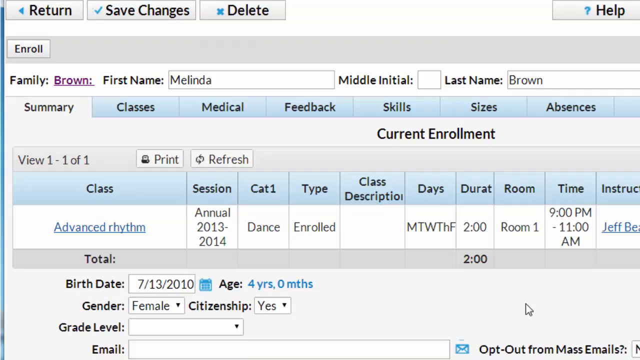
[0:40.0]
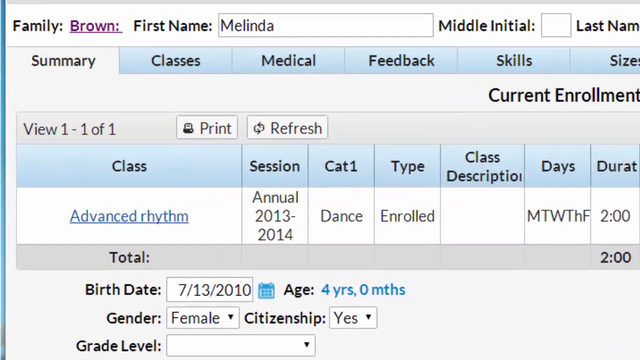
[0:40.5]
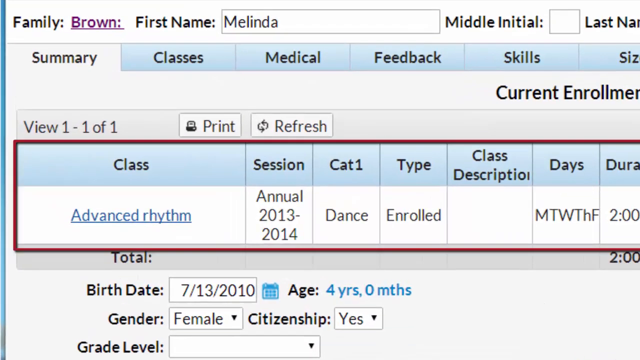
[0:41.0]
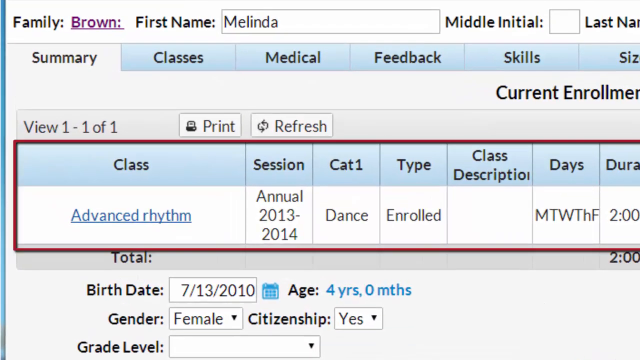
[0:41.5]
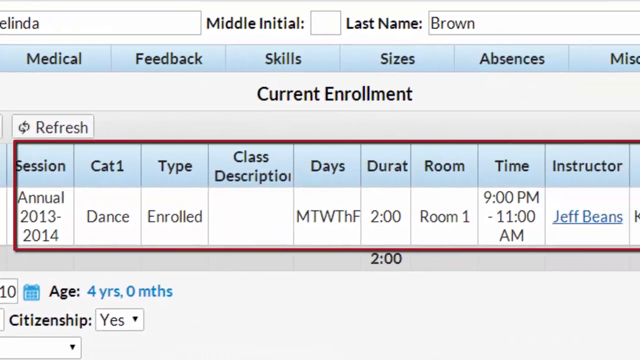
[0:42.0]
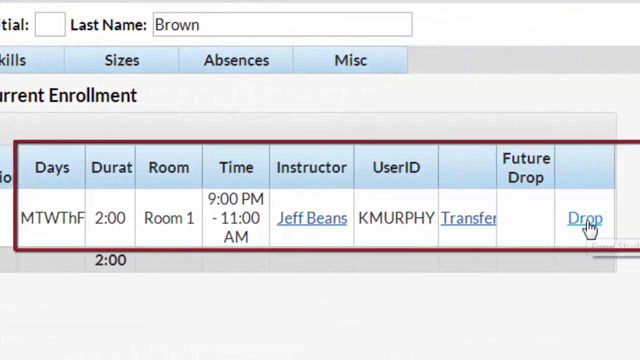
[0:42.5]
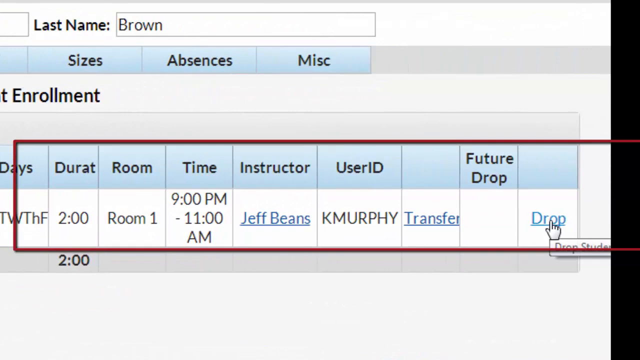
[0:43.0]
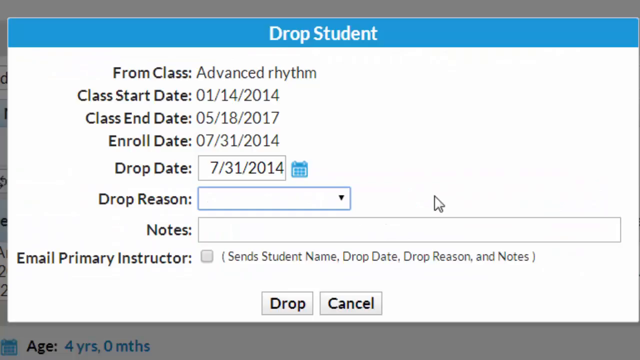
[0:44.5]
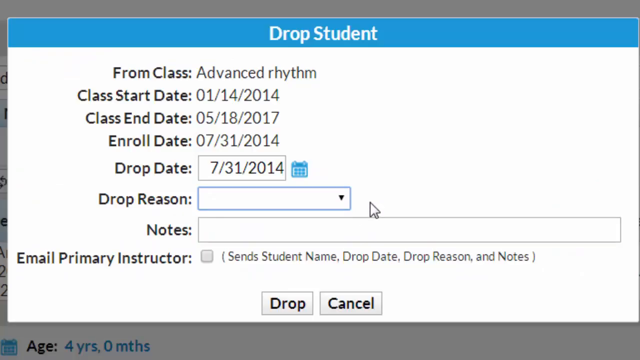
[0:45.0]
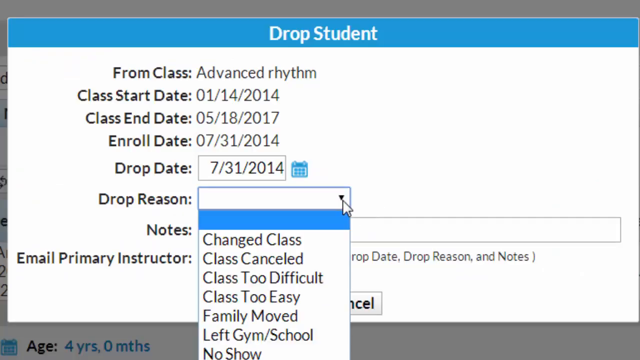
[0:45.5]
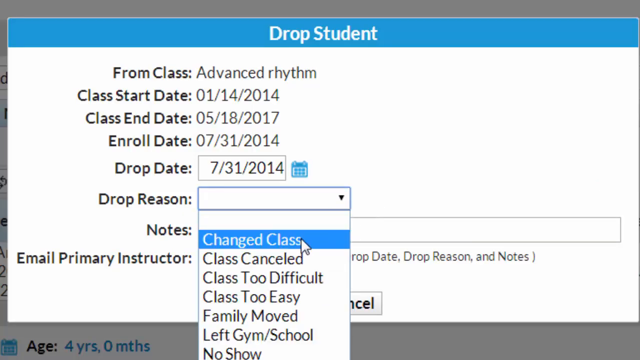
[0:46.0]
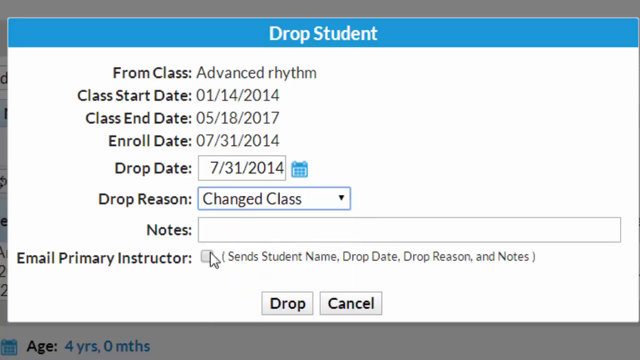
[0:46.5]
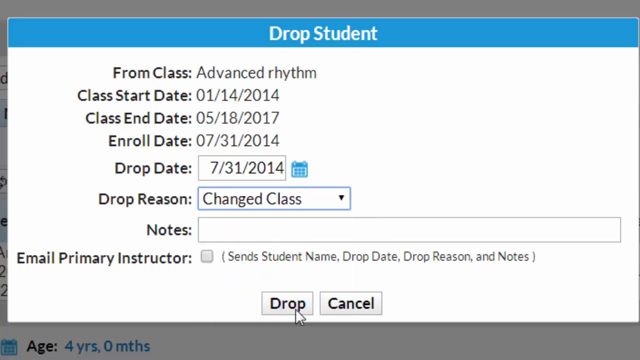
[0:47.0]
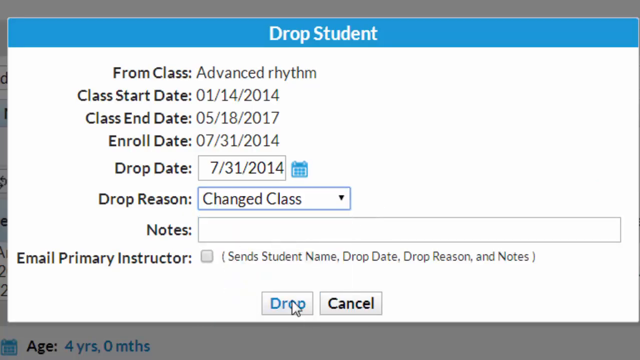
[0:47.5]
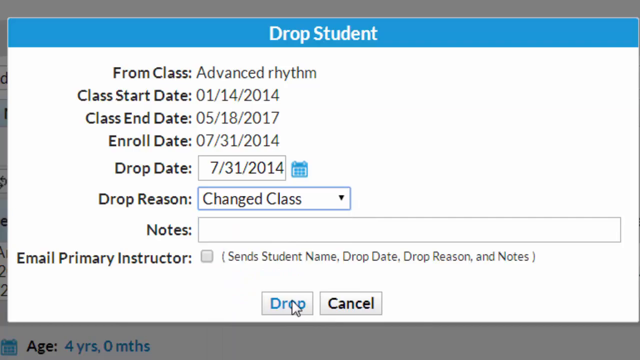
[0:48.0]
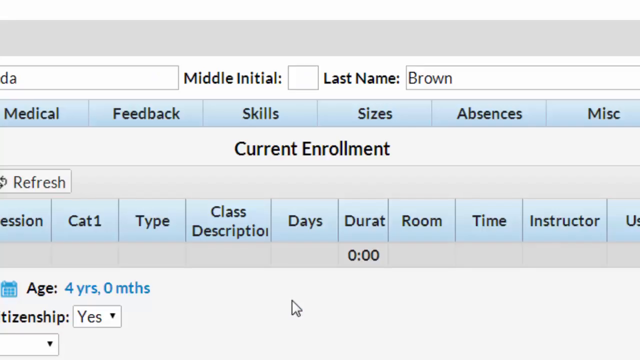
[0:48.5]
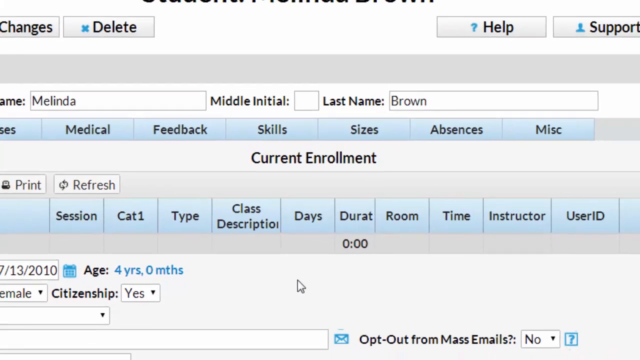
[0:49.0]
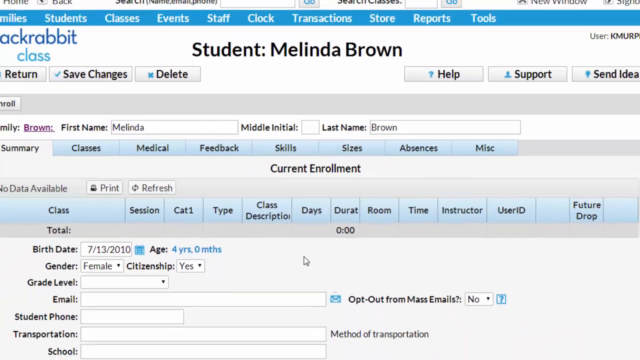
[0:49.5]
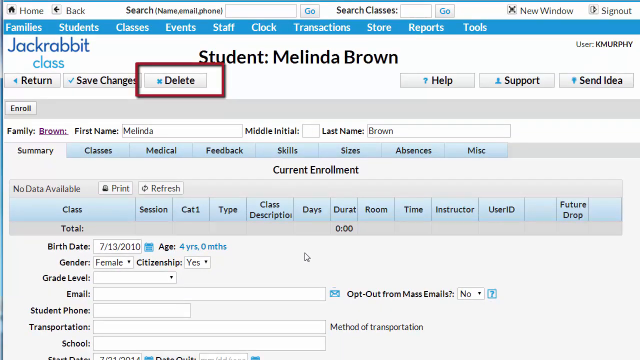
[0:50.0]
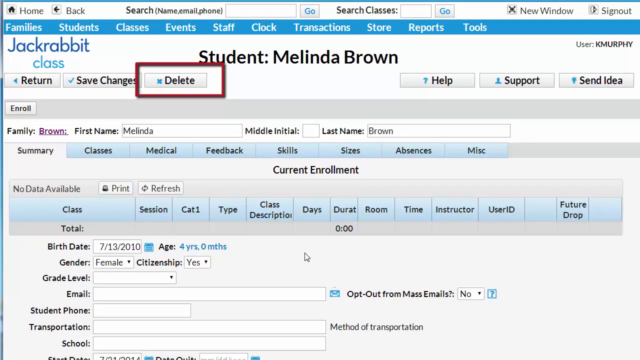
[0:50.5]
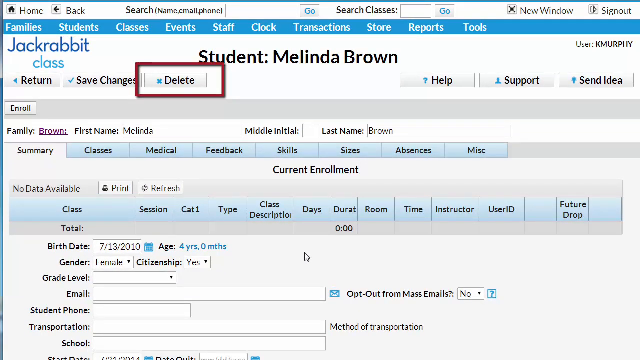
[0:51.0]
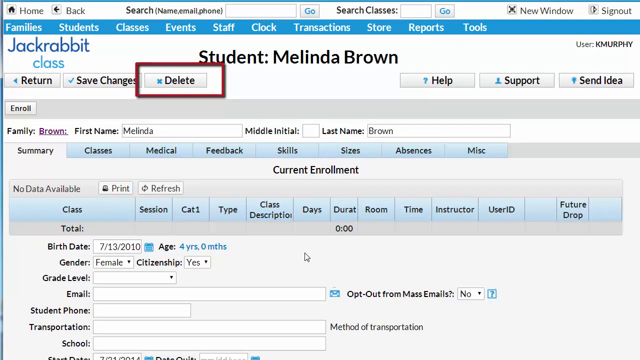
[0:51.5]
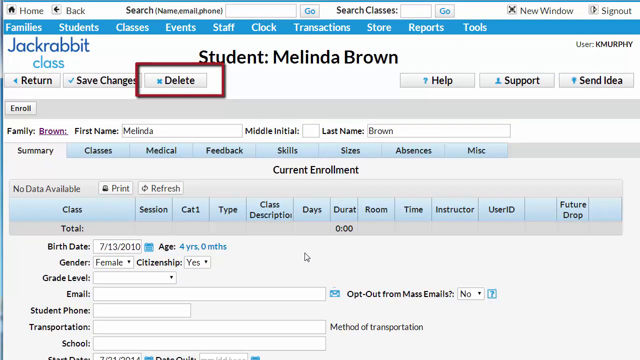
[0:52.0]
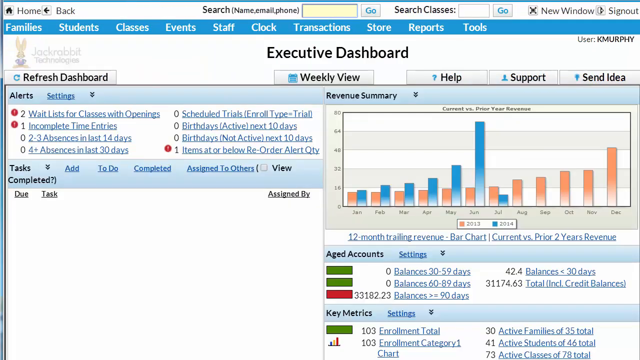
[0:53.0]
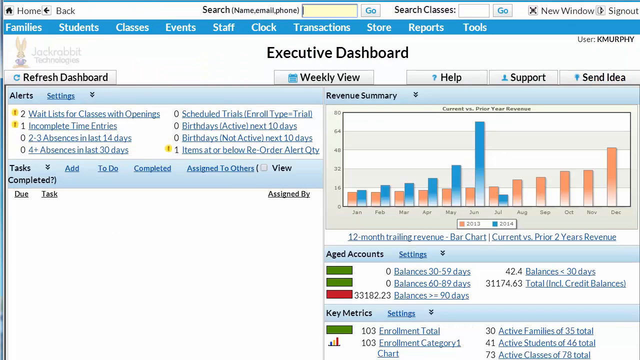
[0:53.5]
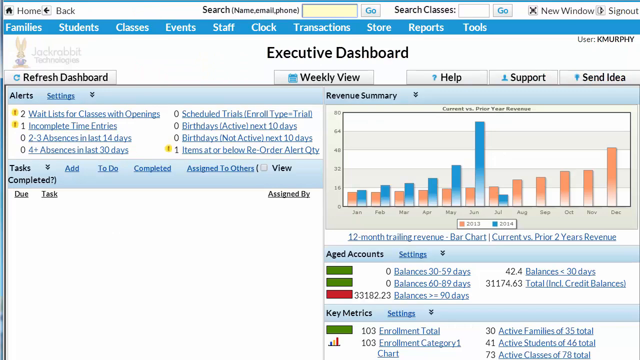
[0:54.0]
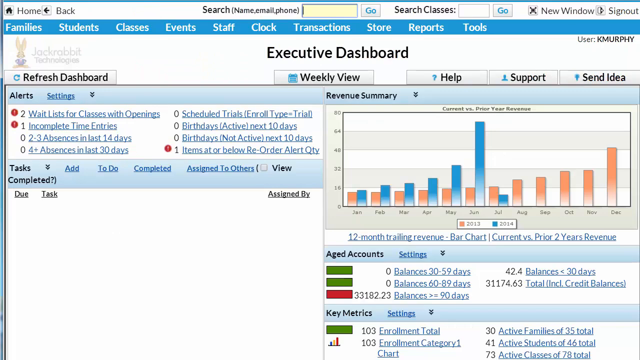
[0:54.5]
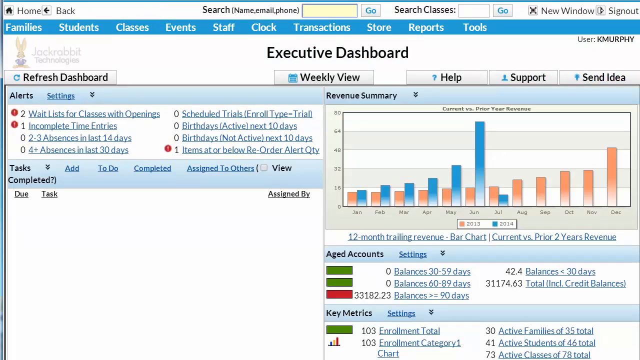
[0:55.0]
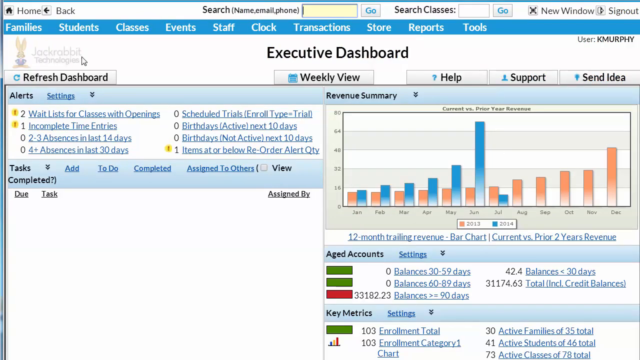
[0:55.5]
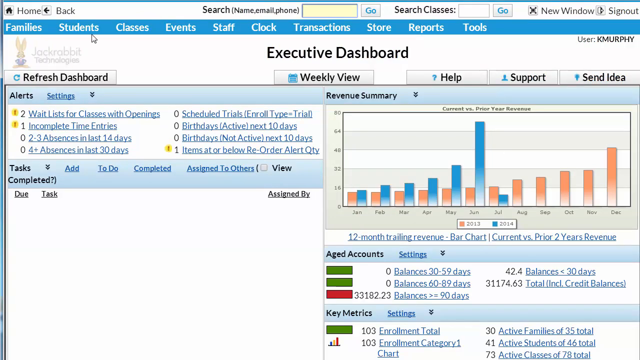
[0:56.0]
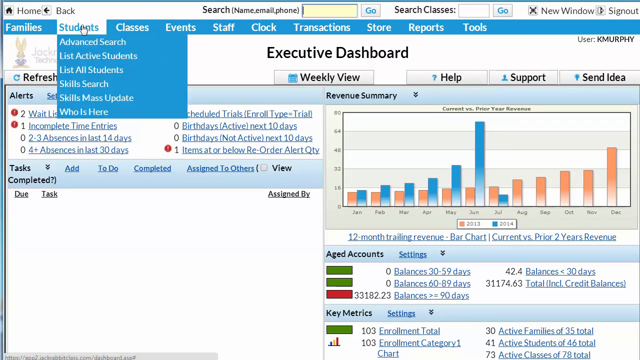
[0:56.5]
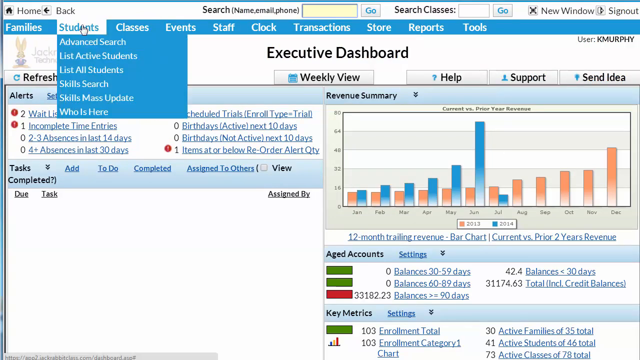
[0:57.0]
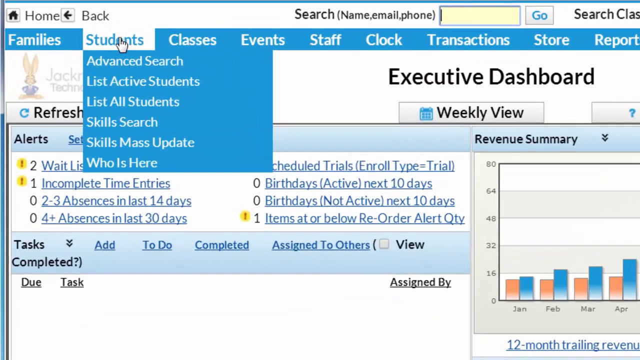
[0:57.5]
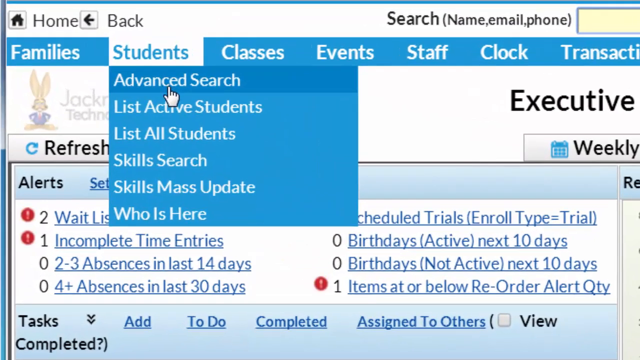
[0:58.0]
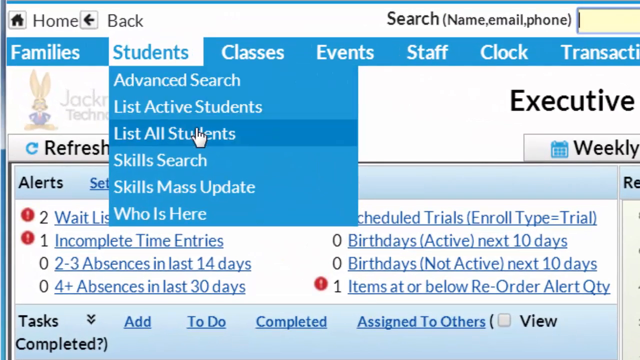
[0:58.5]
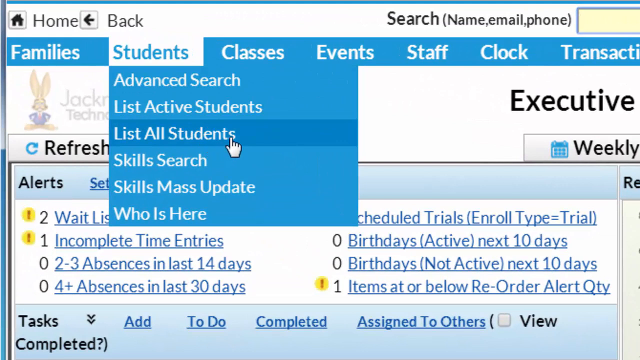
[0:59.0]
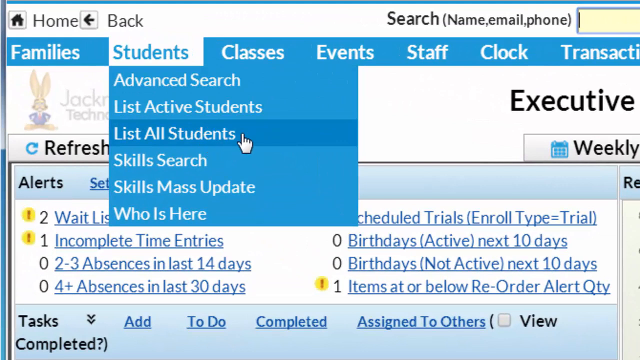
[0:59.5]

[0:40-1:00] The view is zoomed in on a section under the "Current Enrollment" header. The class highlighted is Advanced Rhythm, and the whole section is highlighted by a red rectangular outline. The Session is Annual 2013-2014, Cat1 is Dance, the Type is Enrolled, and Class Description is blank. The days are Monday, Tuesday, Wednesday, Thursday and Friday, and the duration is two hours. Scrolling further right, the Room is Room 1, the time is 9:00 PM to 11:00 AM, the instructor is Jeff Beans, and the user ID is KMURPHY. The next section has no header but says Transfer, followed by Future Drop, which is blank, and then a drop button that is hovered over to drop the student. It is clicked, bringing up a page that says "Drop Student". The mouse hovers over the drop reason, a drop-down menu appears, and the option selected is Changed Class. The "Drop" button is clicked and the pop-up closes. Back at the top, the Delete button is highlighted once again. A new page of an Executive Dashboard appears. At the top of the page, the "Students" tab is hovered over, bringing up a drop-down menu, which is zoomed in on, and the "List All Students" option is selected.